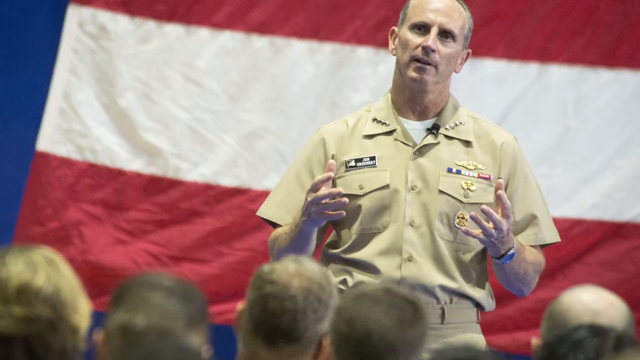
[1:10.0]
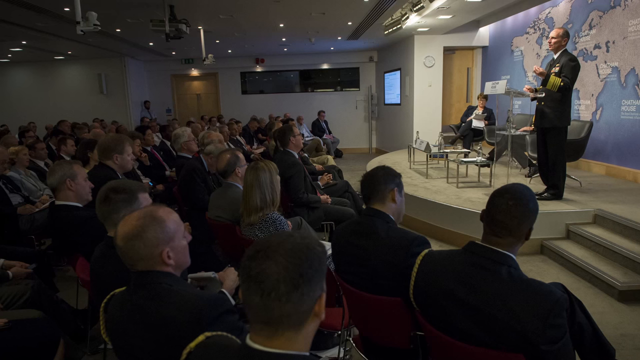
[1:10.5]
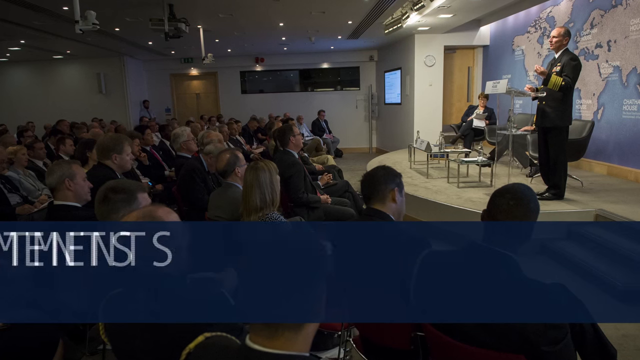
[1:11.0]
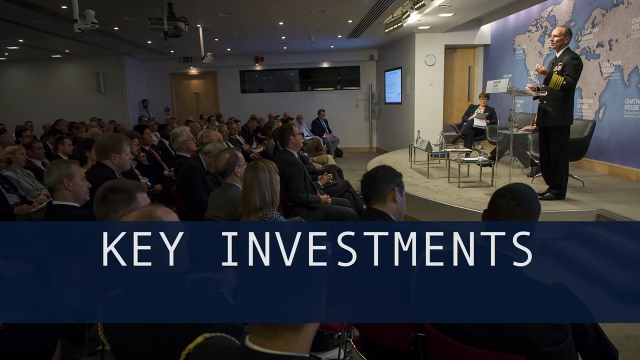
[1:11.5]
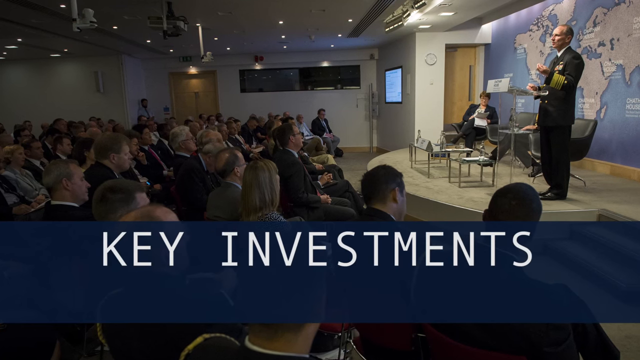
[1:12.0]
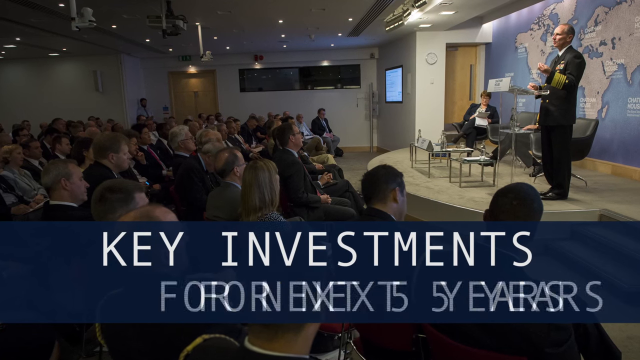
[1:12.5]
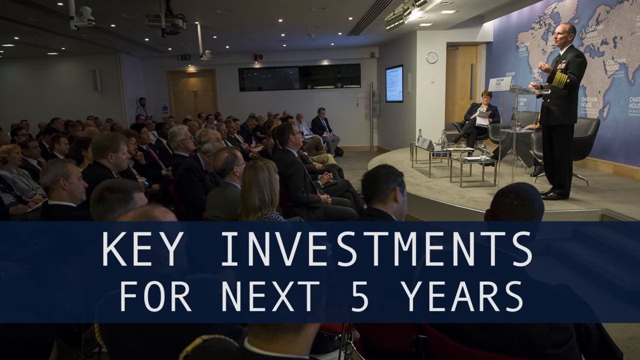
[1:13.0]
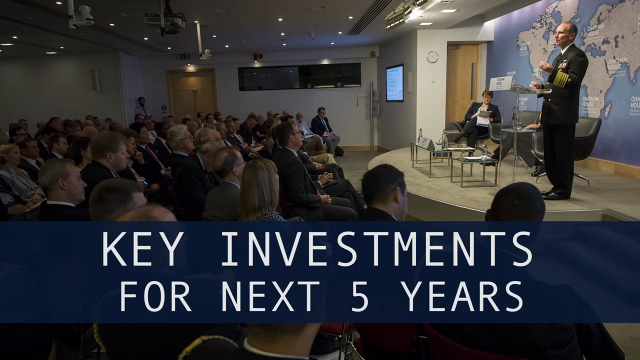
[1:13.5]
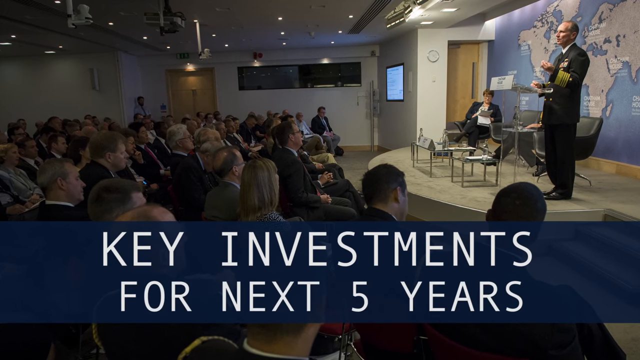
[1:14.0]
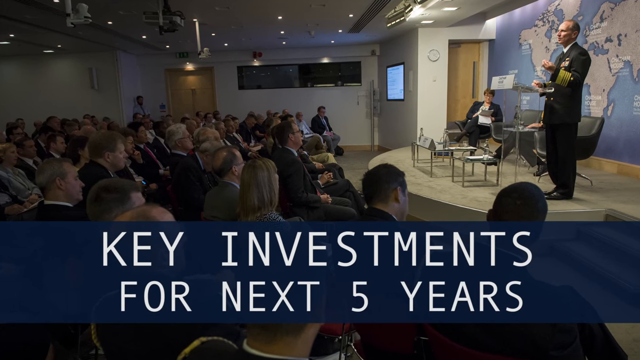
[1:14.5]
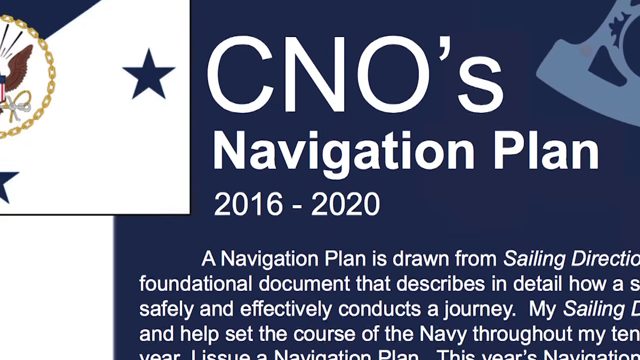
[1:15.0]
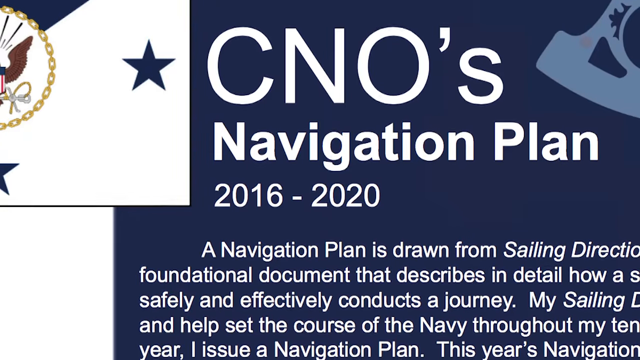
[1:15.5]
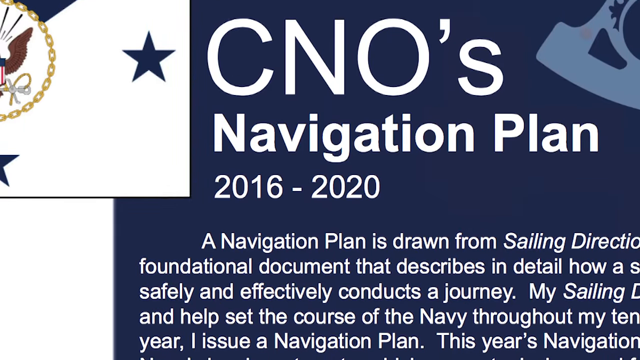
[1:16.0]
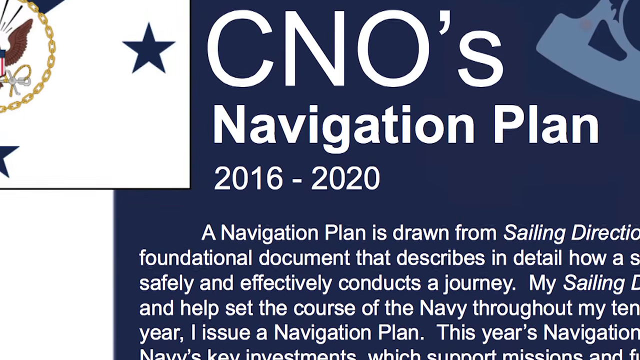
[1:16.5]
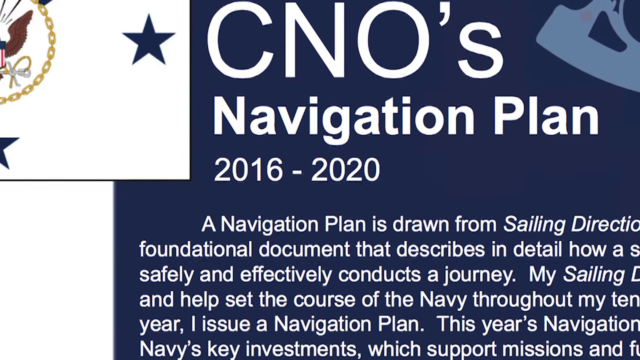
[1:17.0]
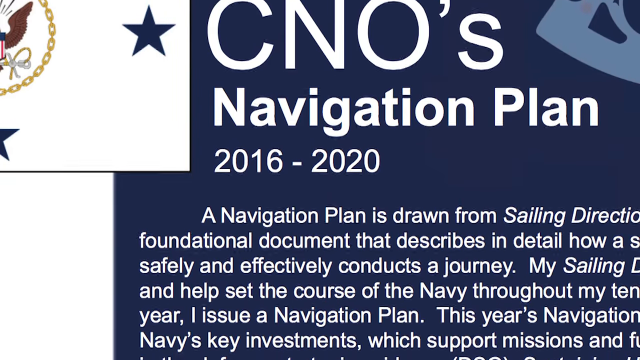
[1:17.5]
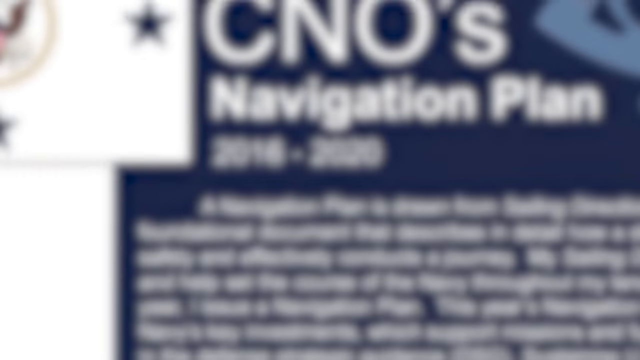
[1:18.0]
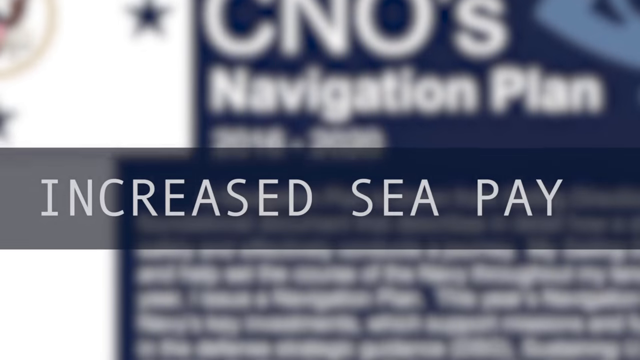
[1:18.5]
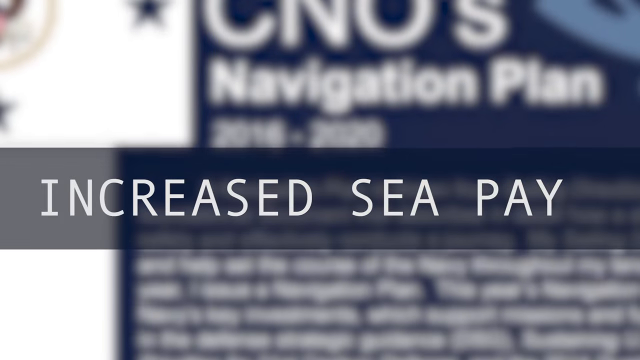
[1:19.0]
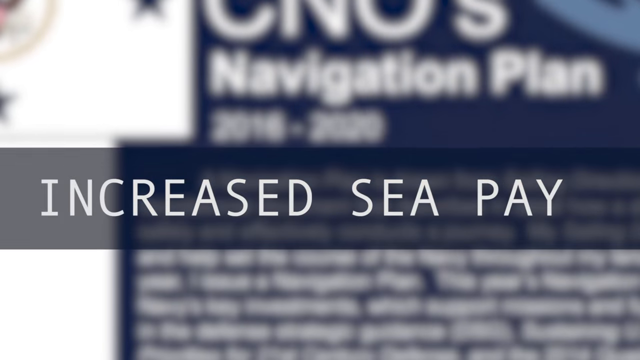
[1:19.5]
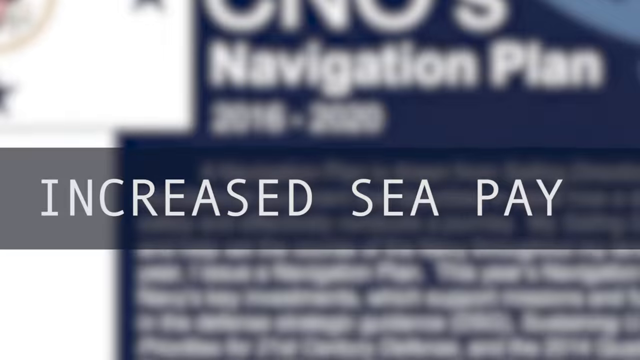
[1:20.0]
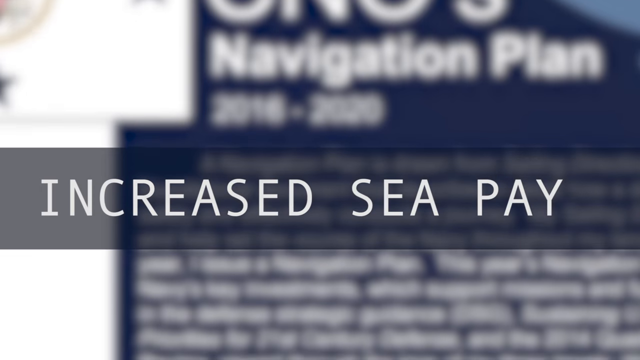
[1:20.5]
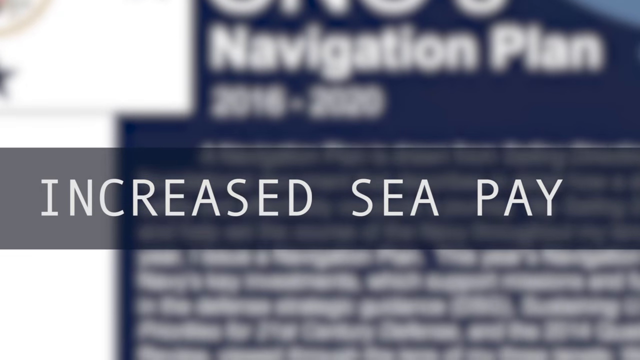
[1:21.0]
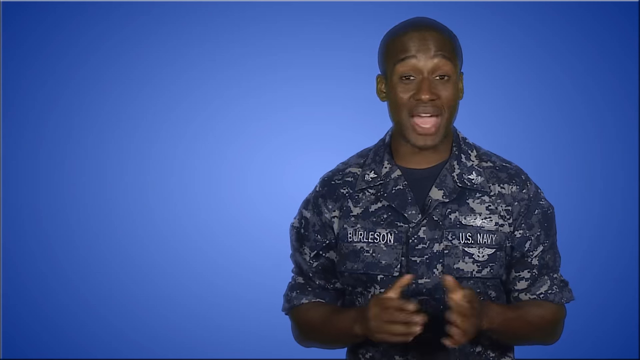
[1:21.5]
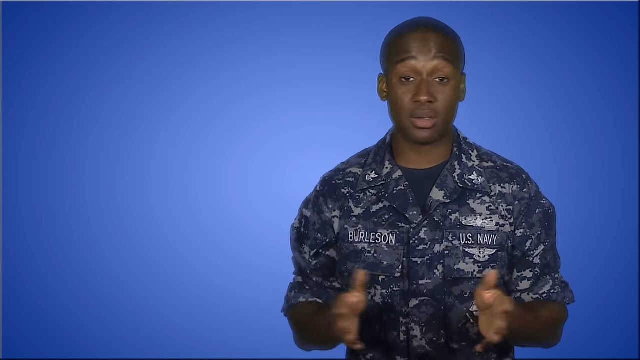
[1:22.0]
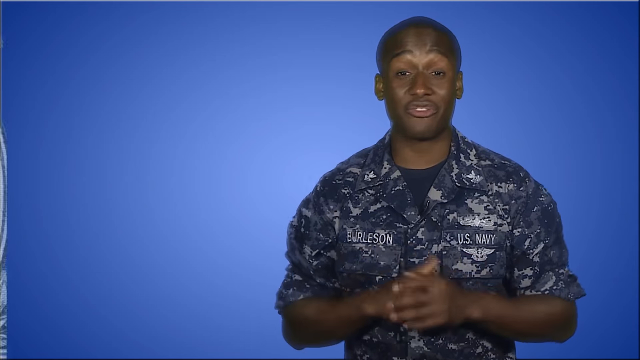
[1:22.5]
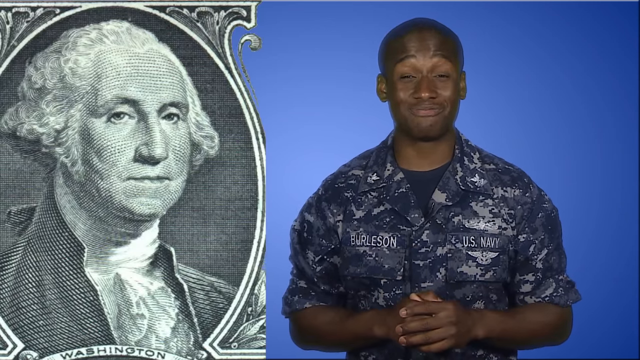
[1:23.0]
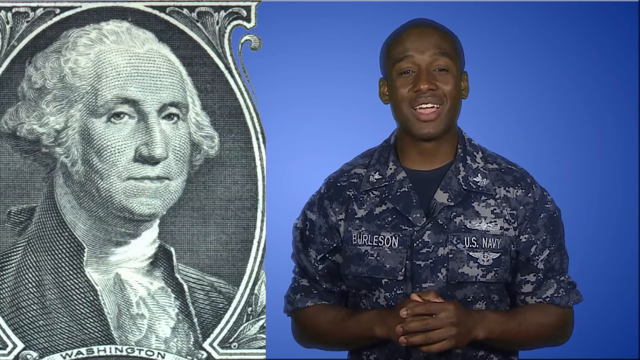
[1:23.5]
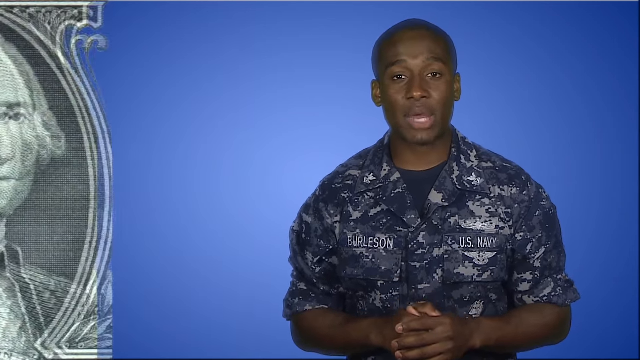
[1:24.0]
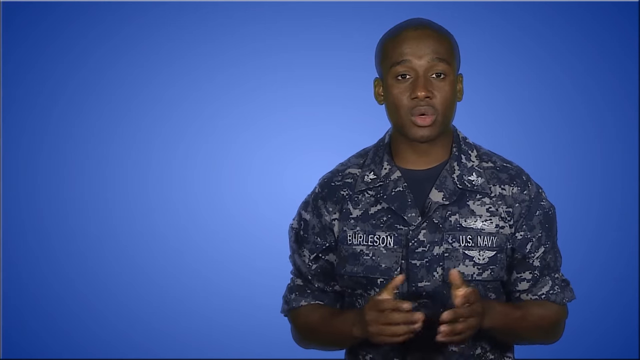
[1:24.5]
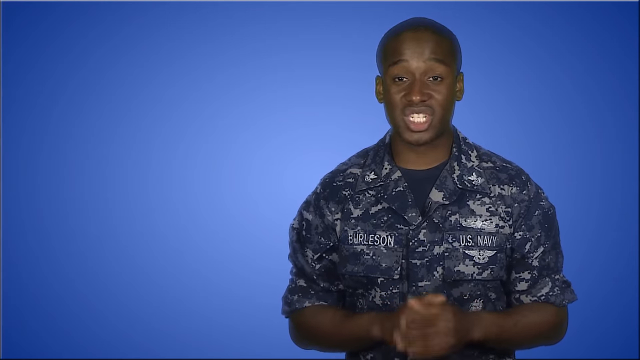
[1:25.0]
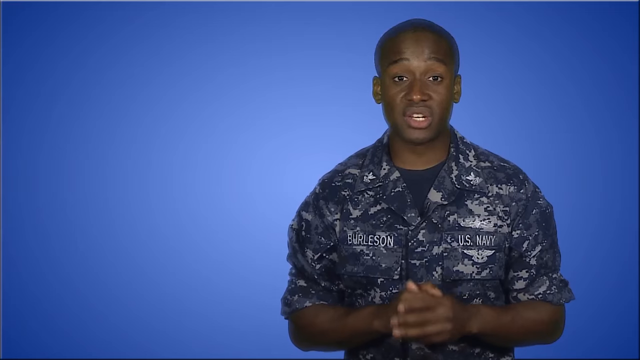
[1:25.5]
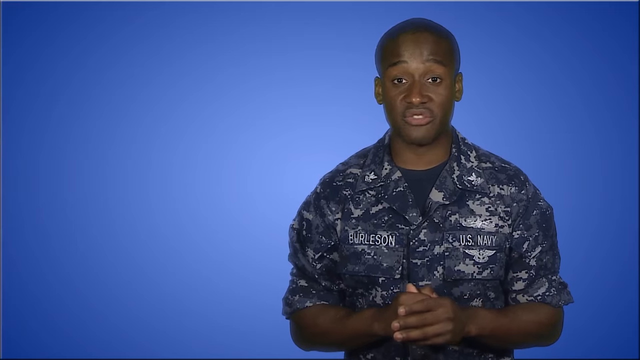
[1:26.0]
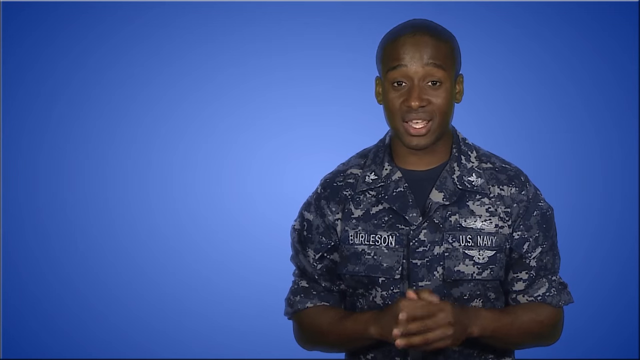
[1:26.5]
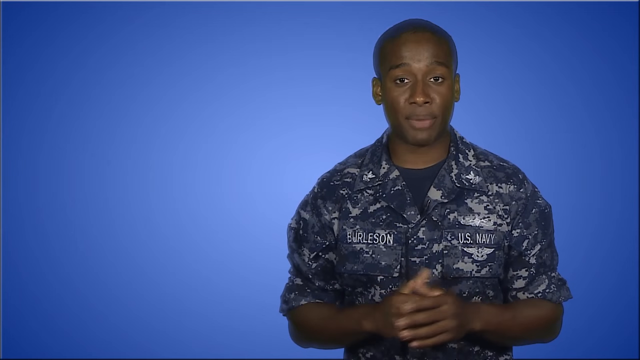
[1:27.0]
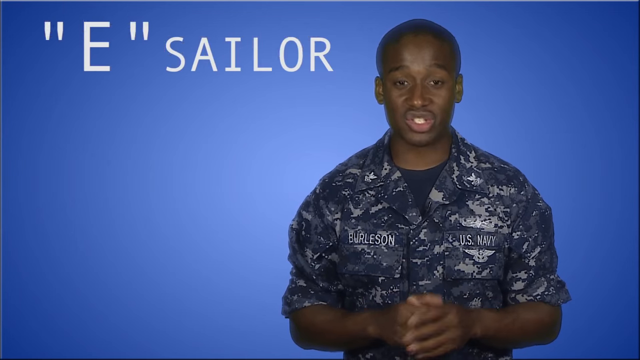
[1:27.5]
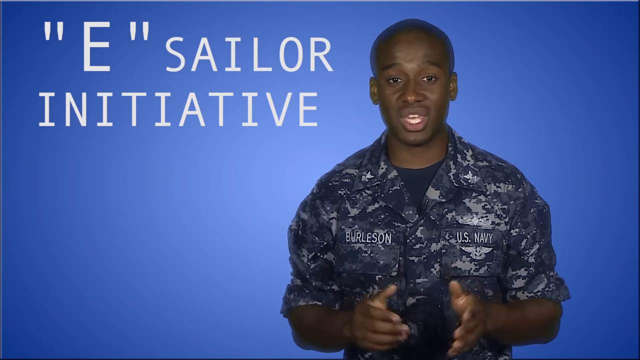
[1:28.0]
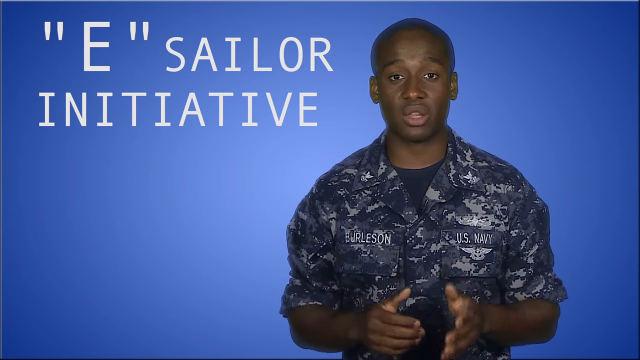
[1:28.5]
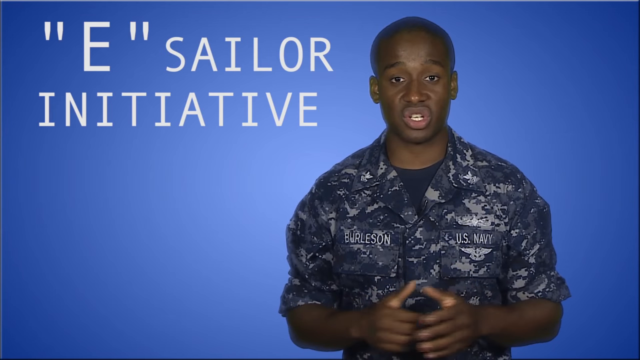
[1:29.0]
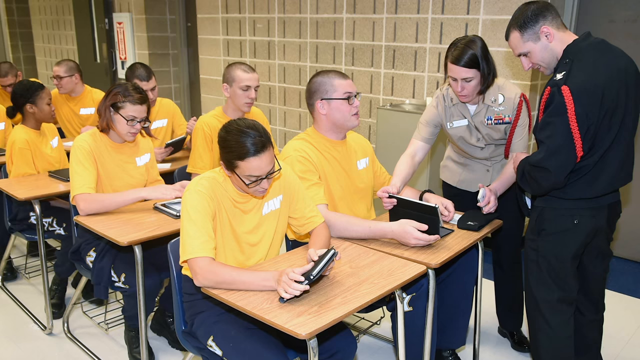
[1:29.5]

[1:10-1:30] An image shows an older white man with gray hair in a short-sleeved tan military uniform with lots of pins on his chest, apparently standing on a stage with a large American flag behind him, and the backs of the tops of the audience's heads at the bottom of the screen. Another image shows a man on a stage in a black, military suit-like uniform with a black blazer, black pants, some yellow lines around the sleeves and lots of pins on his chest. A small audience sits in chairs lined up on the floor in front of the small stage, a few other people sit in chairs on the stage, and the stage background is a large map of the world. A somewhat transparent blue rectangular box pops up at the bottom of the screen with white text reading "key investments for next five years." Next is an image, possibly from a book or a website, with "CNO's Navigation Plan, 2016 - 2020" at the top and a paragraph of white text on a blue background underneath; the view scrolls down the page a little to show more text. A transparent blue rectangular box pops up across the screen with white text reading "Increased Sea Pay." The video then shows the young Black male officer Burleson of the Navy in black, white and gray fatigues, standing in front of a blue wall and speaking with his hands clasped in front of him. On the left side appears a picture of George Washington, textured like a dollar bill; the man smiles slightly, and the picture goes away as he continues speaking. The words "e-Sailor Initiative" pop up on the left side of the screen. Then an image shows a small classroom with students in yellow shirts, who all look like adults or college age, sitting in rows of two, while two instructors in military button-up shirts help some of the students in the front row with some kind of square device, maybe a tablet.